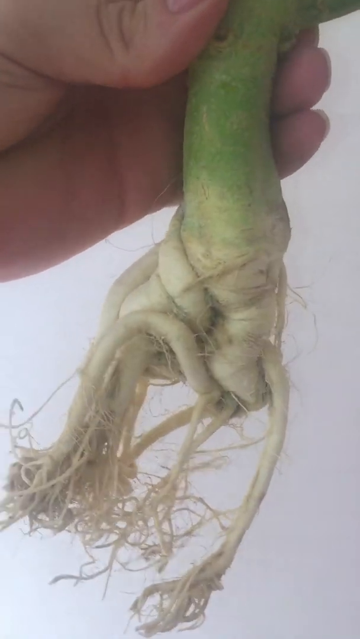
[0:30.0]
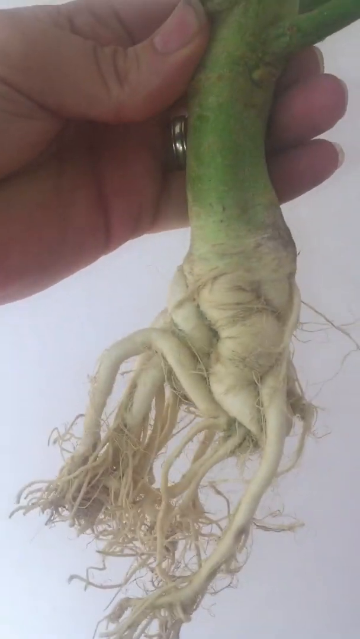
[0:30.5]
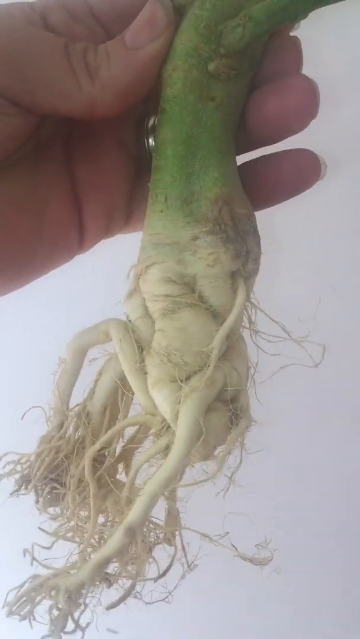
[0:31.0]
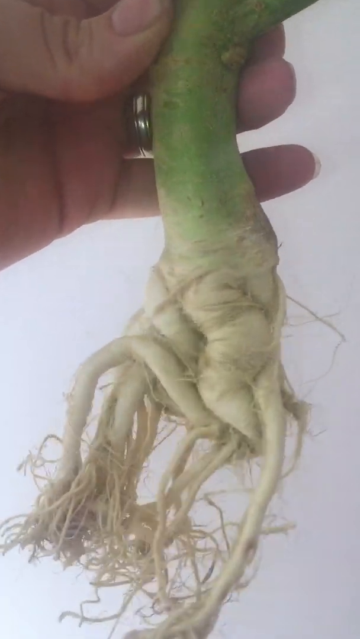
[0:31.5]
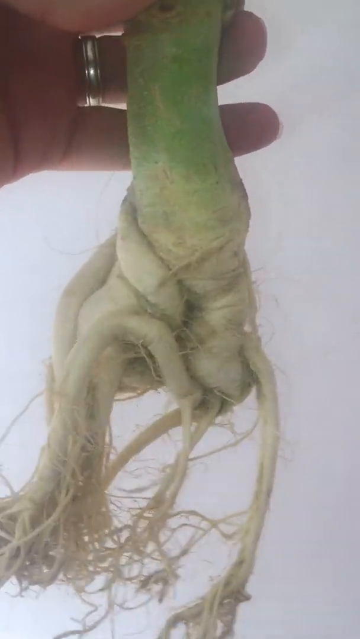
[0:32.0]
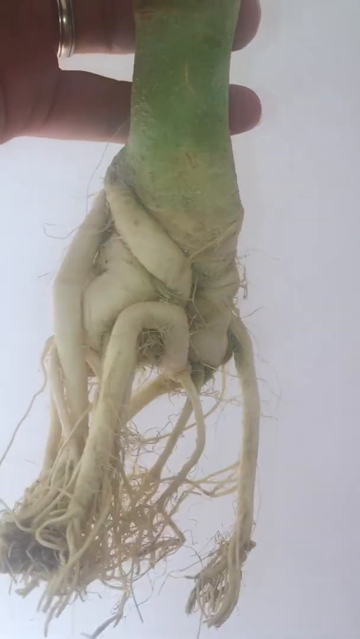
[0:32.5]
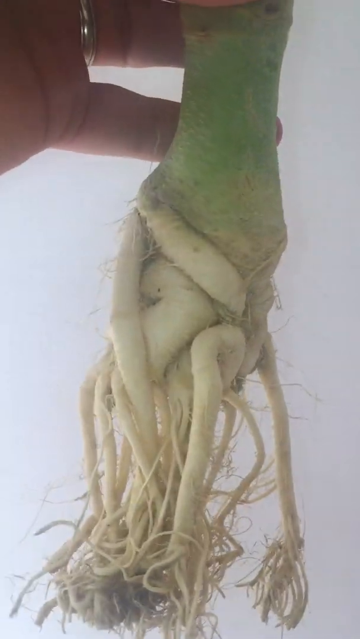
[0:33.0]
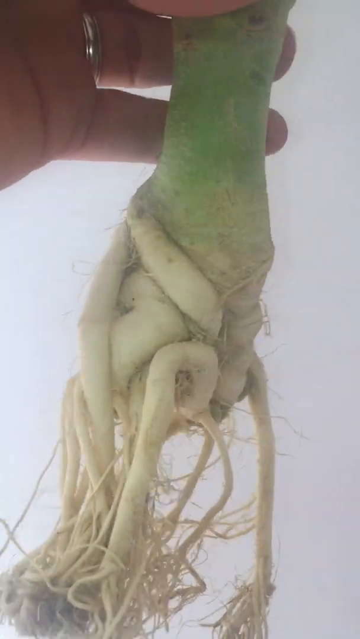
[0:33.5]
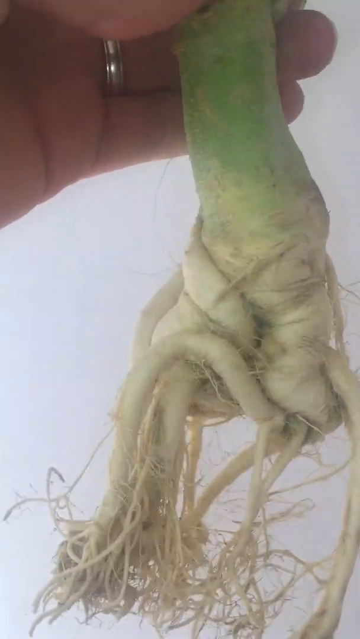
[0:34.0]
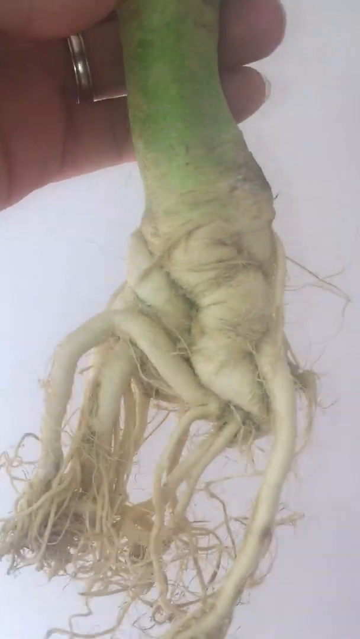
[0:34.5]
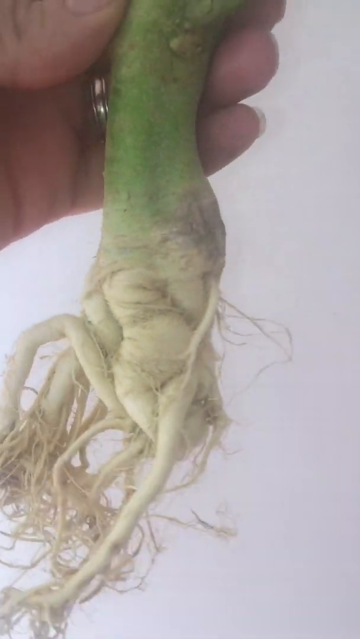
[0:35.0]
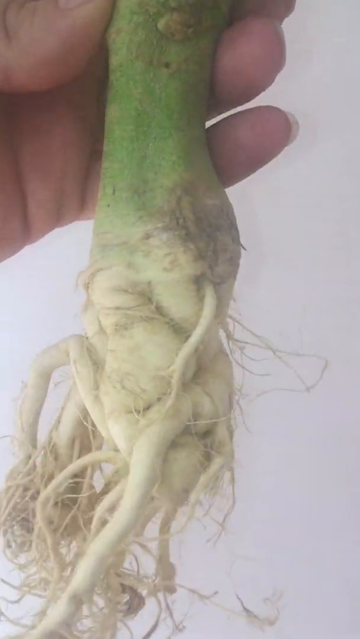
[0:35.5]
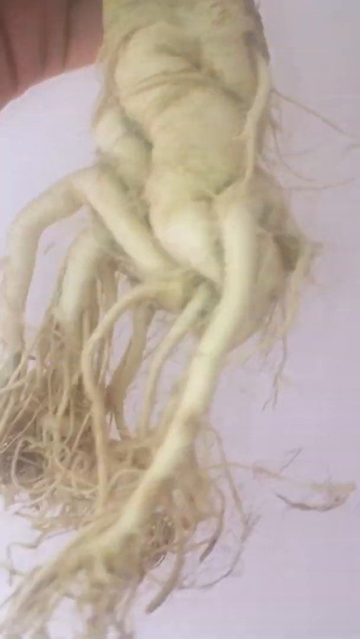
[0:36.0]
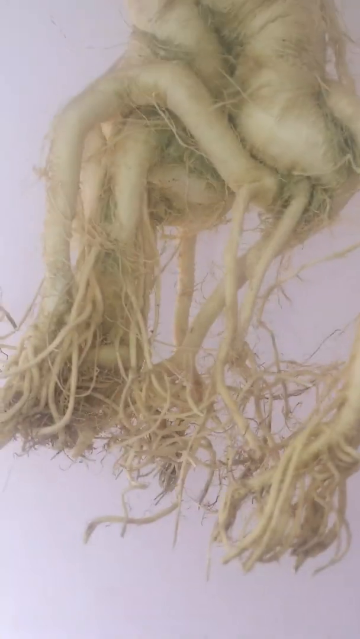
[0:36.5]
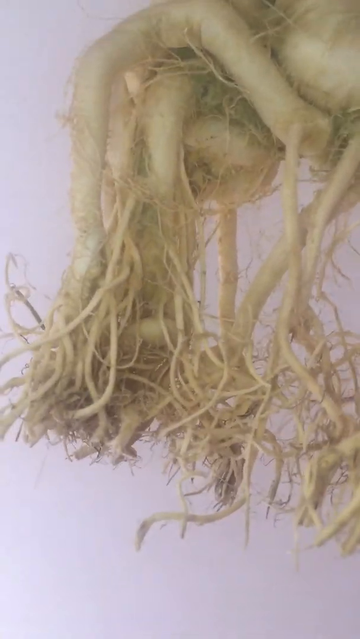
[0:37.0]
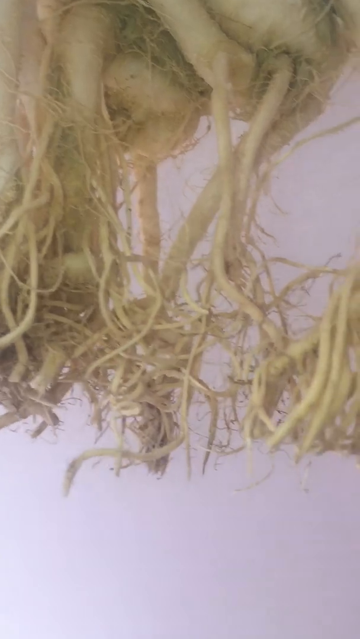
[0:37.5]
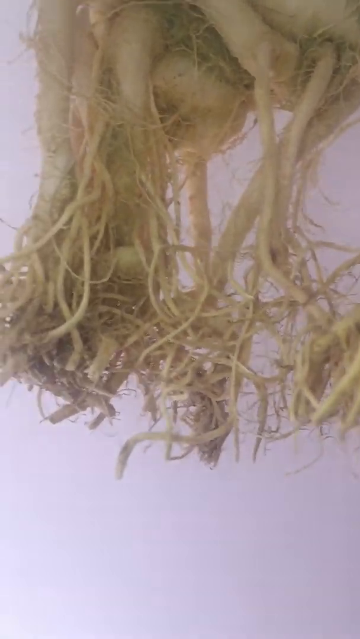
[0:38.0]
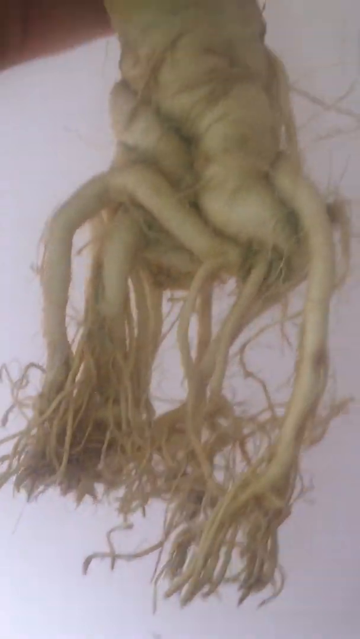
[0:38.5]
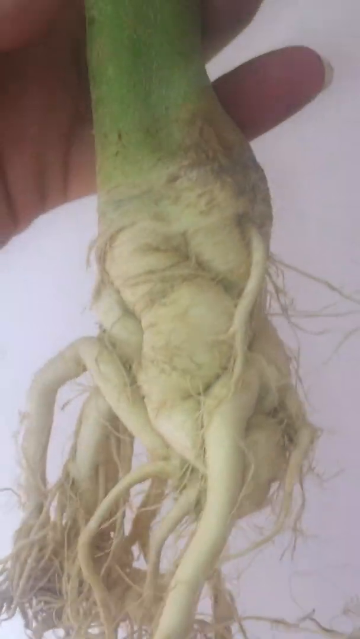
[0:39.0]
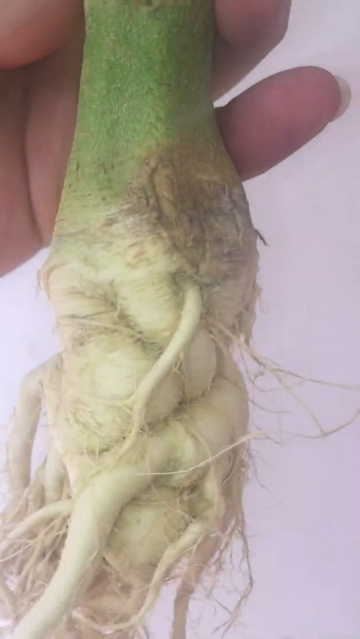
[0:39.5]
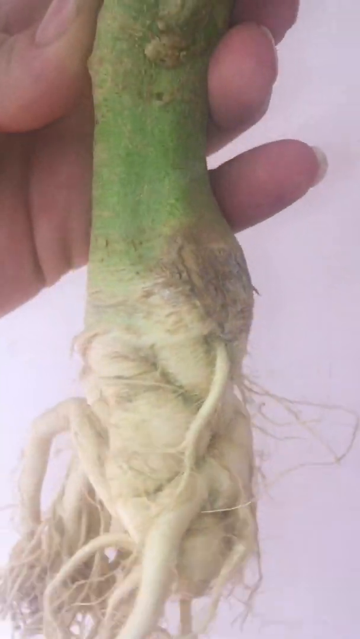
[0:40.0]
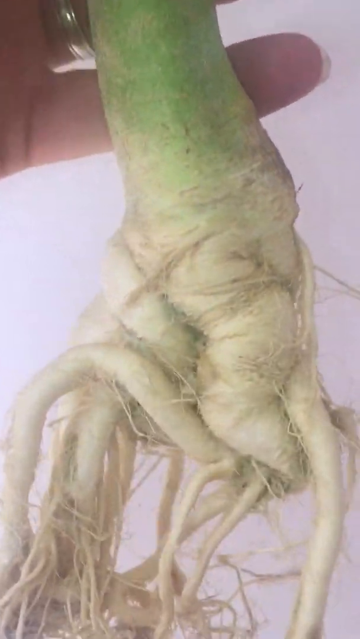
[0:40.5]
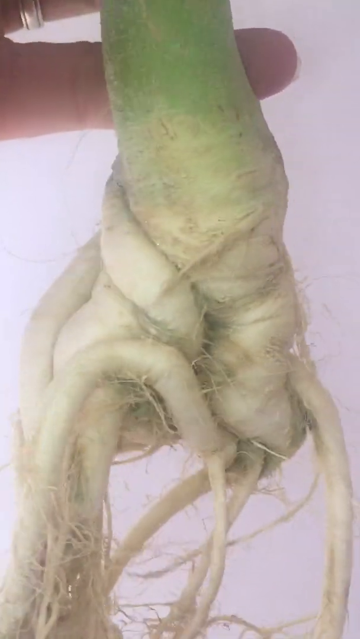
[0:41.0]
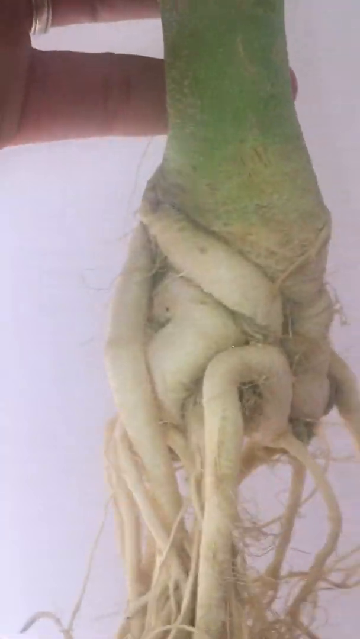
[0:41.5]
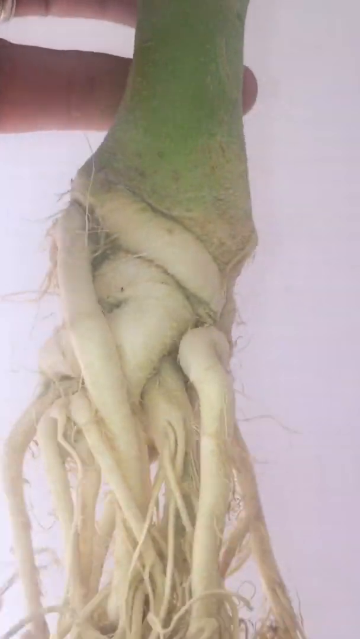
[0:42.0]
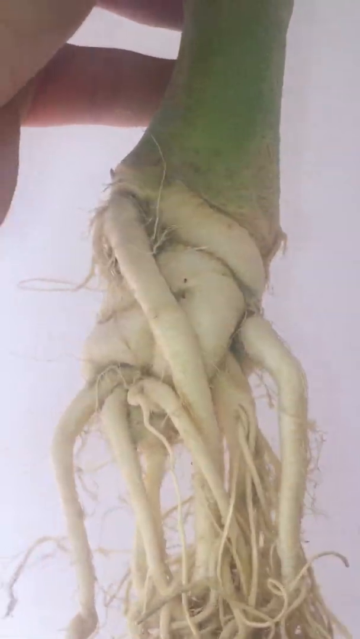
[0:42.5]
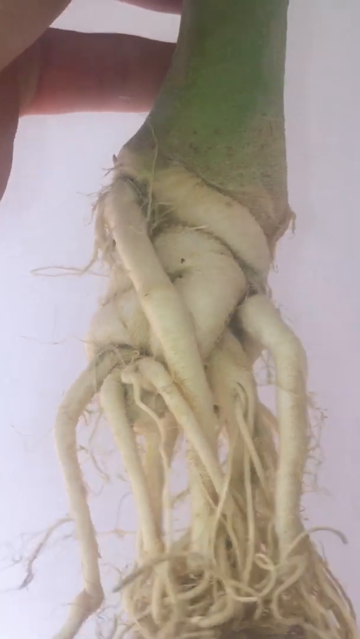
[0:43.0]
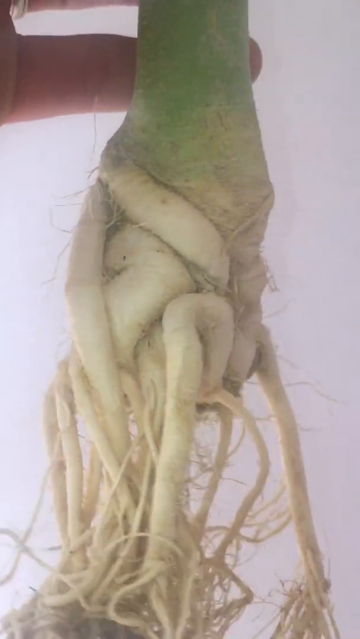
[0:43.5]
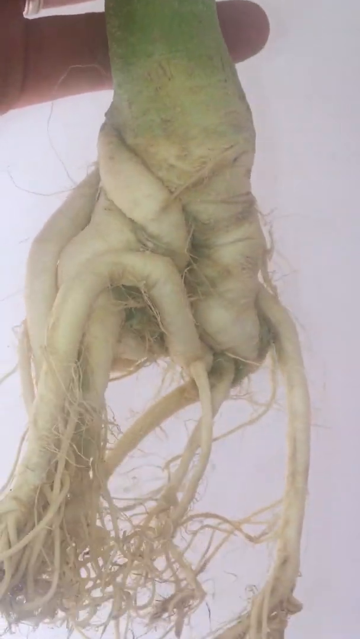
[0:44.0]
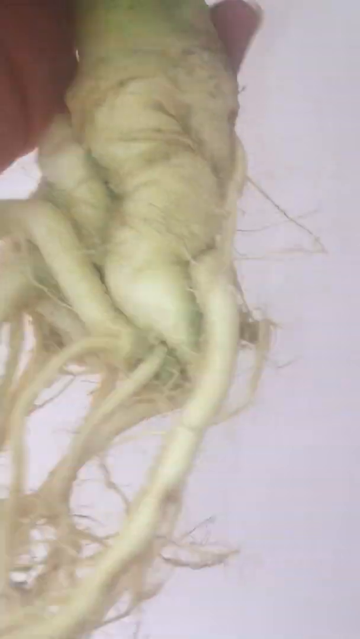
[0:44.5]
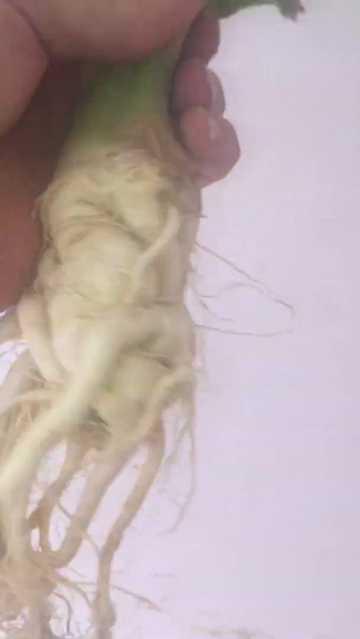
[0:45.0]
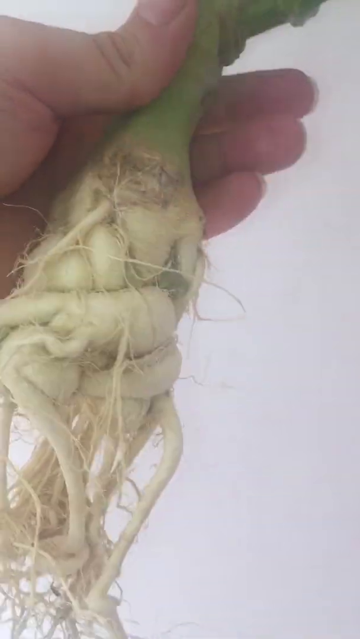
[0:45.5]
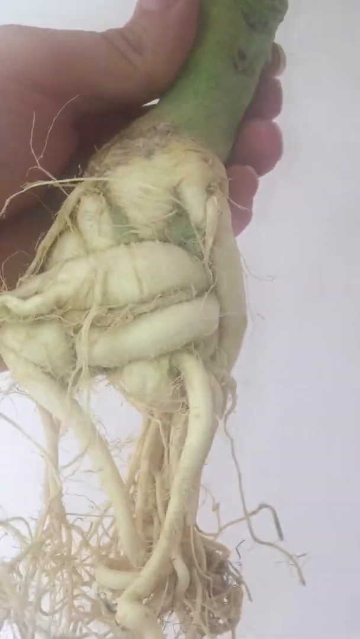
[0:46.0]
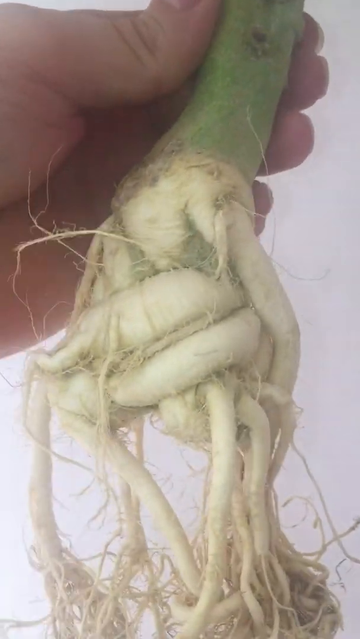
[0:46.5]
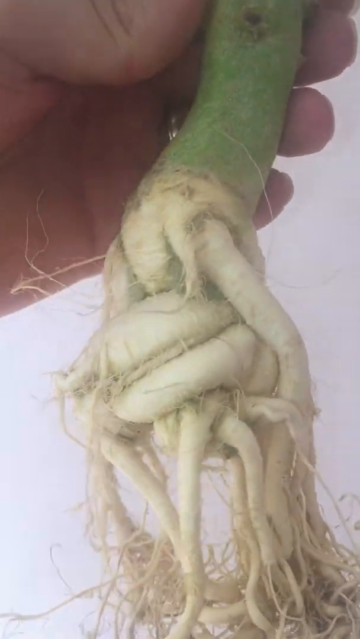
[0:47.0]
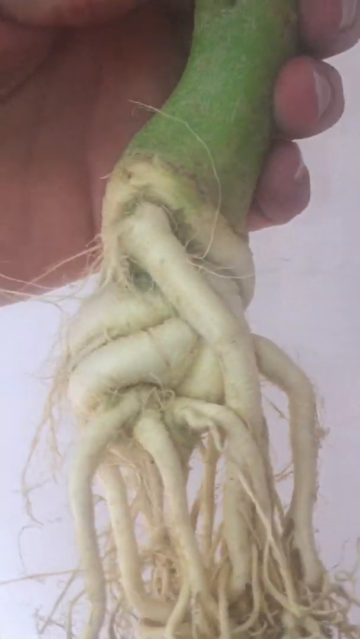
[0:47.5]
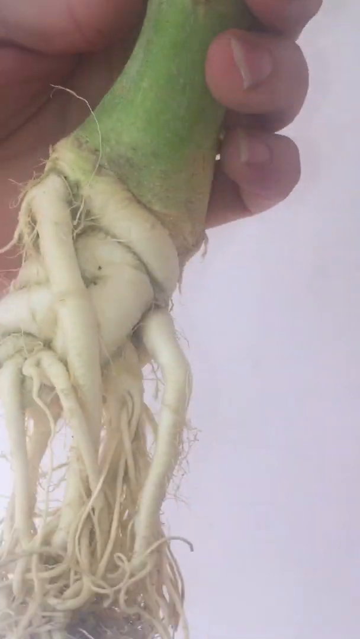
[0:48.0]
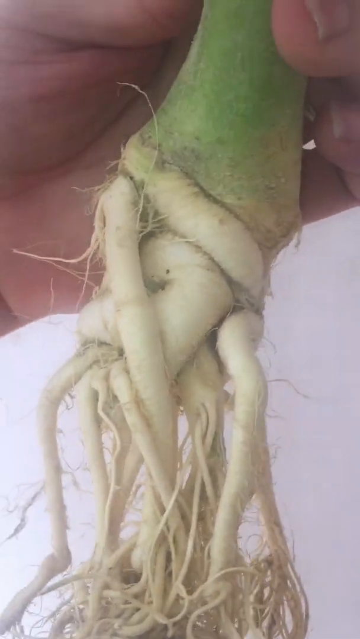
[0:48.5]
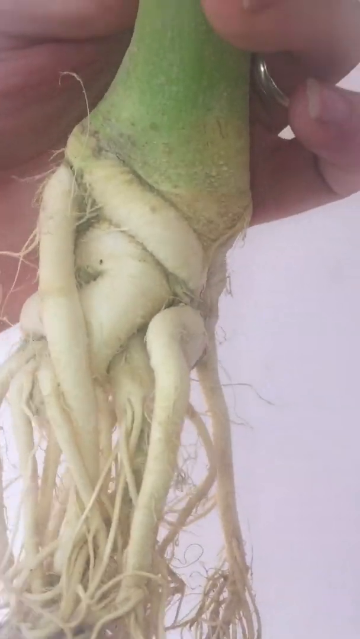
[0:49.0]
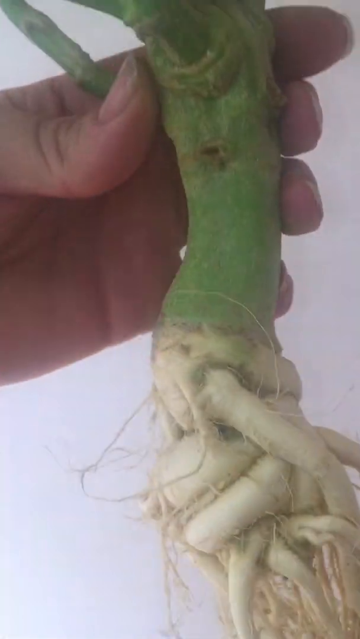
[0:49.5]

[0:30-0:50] The plant is being twisted by a person wearing a ring, who zooms in on the roots. The upper part of the plant is green and the bottom is a bit off-white. The roots twist around each other, with some tiny roots just below the thick ones, and there is a white background where the roots are. The person twists the plant around and around, showing the roots and the green upper part, and zooms in.